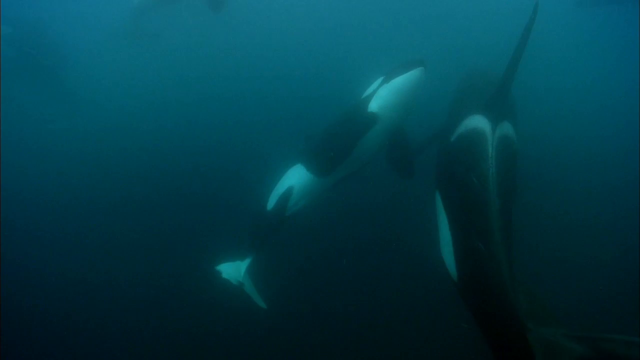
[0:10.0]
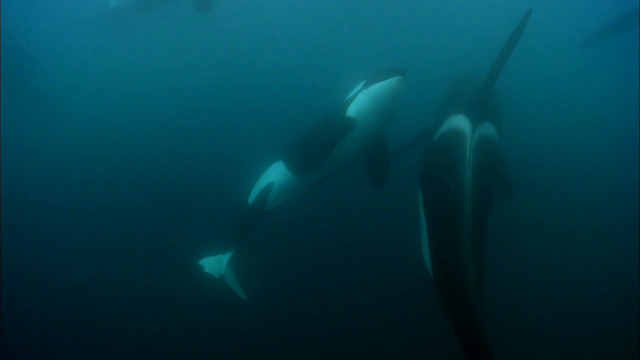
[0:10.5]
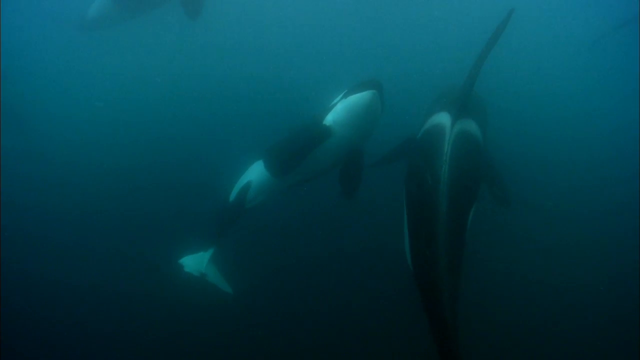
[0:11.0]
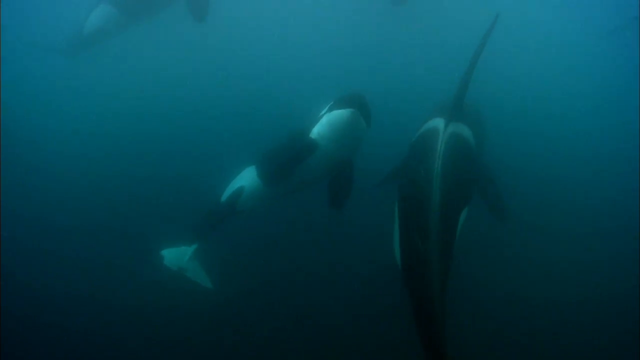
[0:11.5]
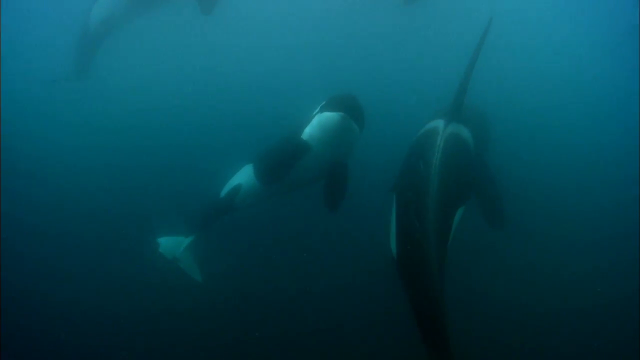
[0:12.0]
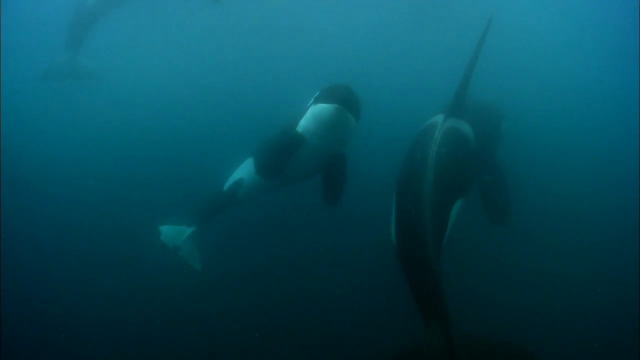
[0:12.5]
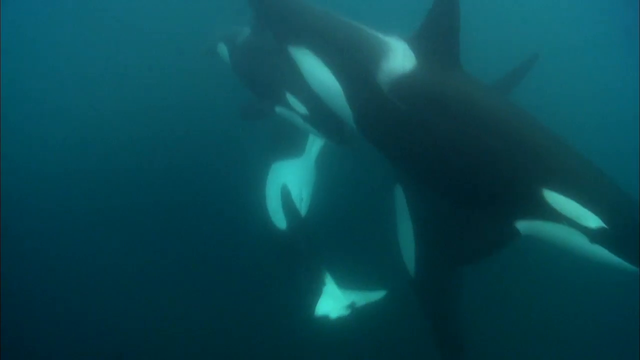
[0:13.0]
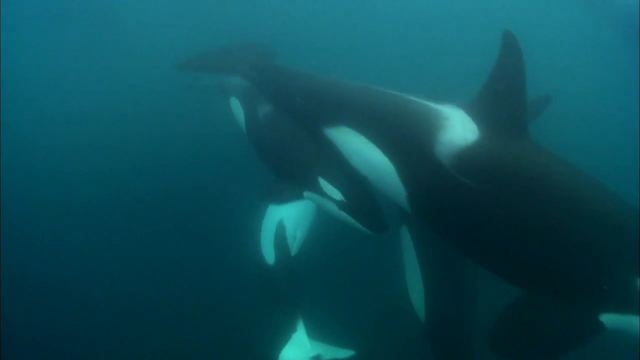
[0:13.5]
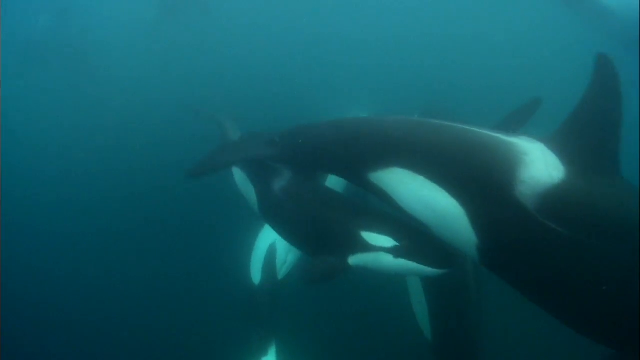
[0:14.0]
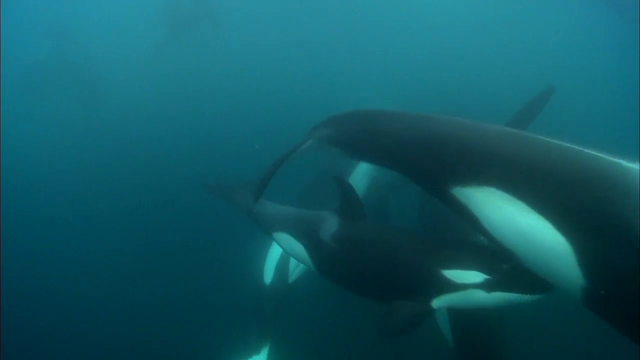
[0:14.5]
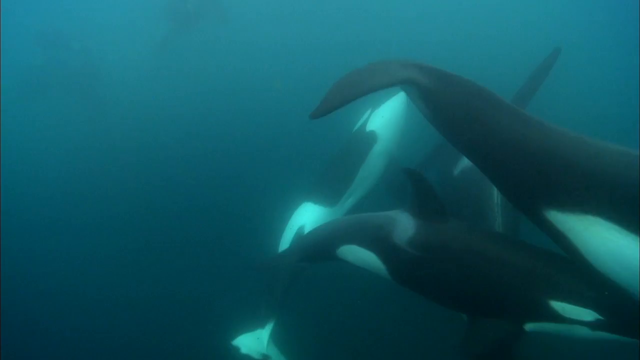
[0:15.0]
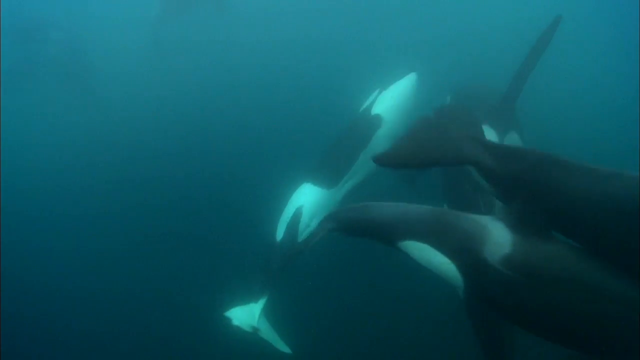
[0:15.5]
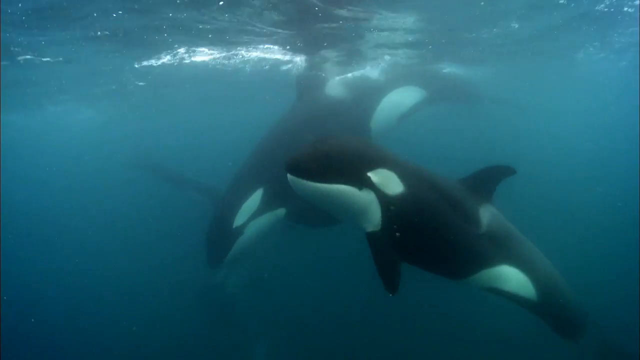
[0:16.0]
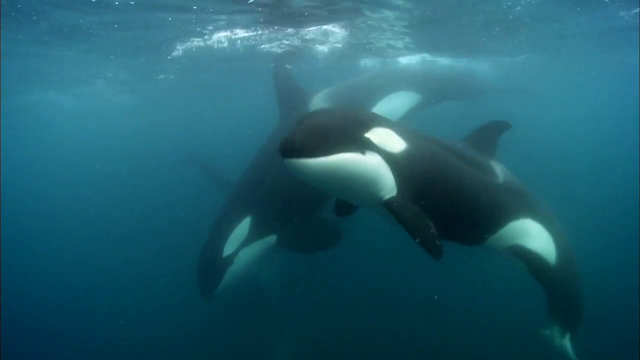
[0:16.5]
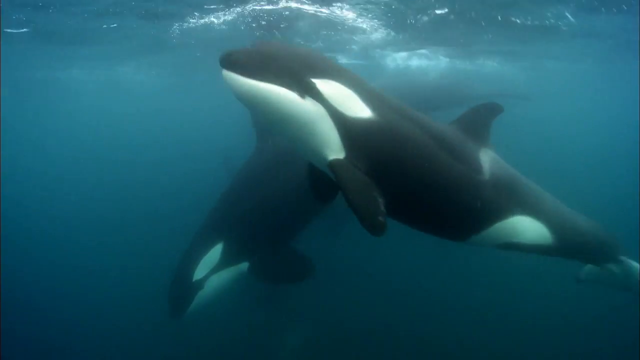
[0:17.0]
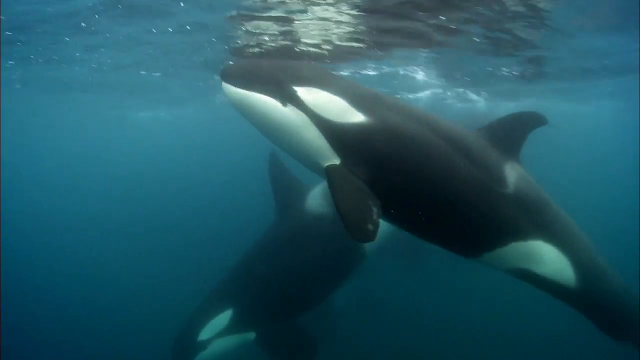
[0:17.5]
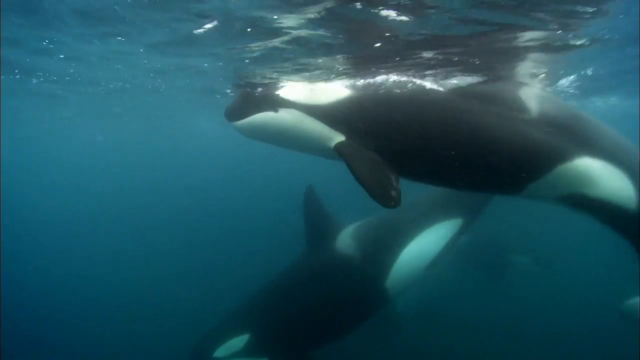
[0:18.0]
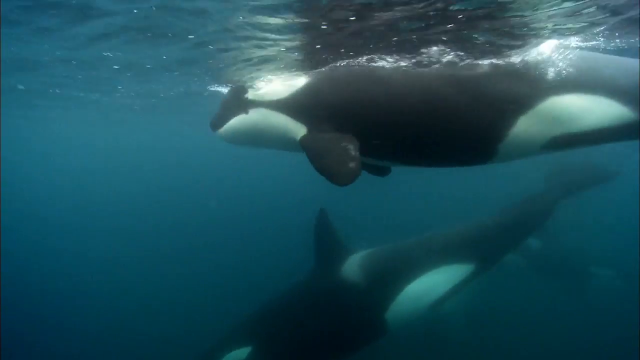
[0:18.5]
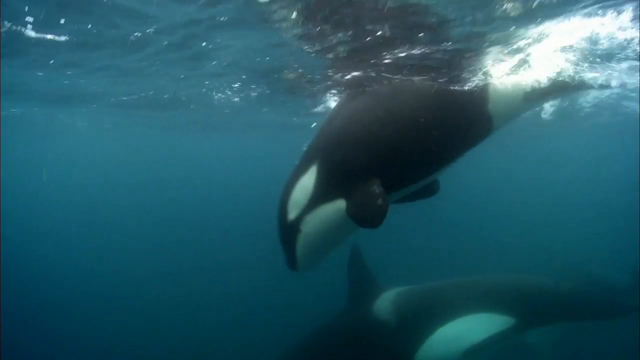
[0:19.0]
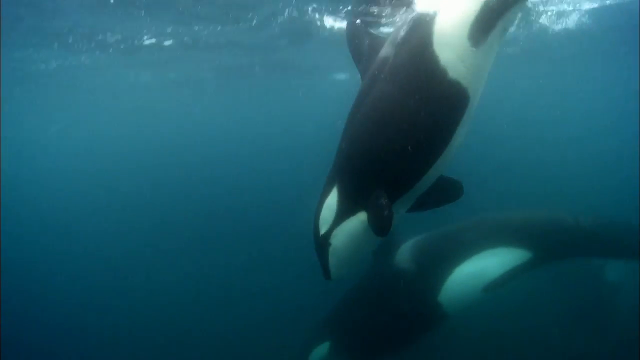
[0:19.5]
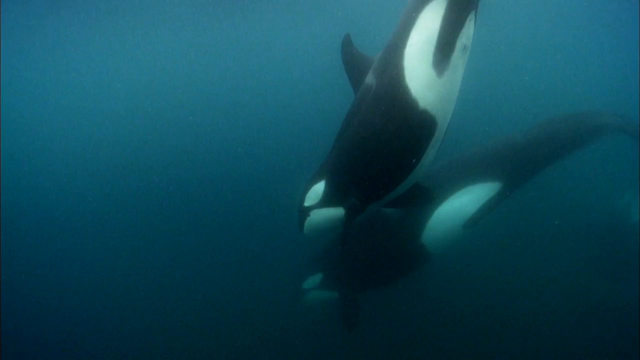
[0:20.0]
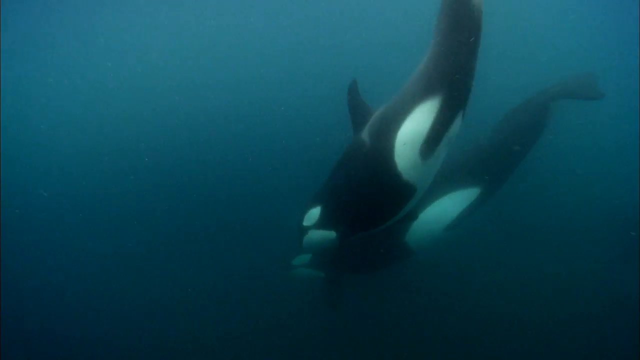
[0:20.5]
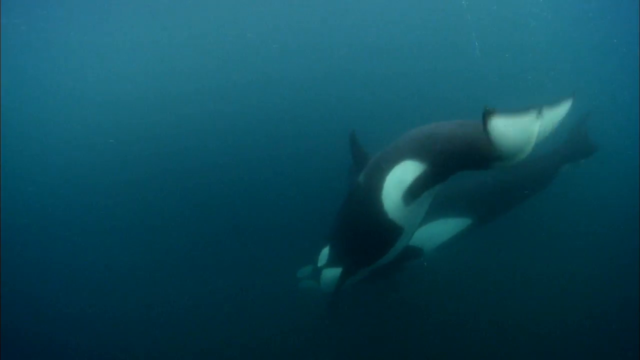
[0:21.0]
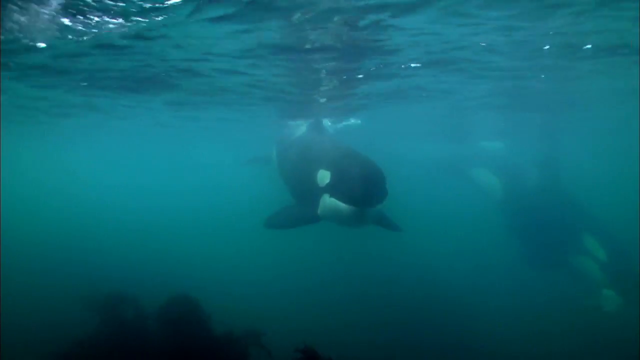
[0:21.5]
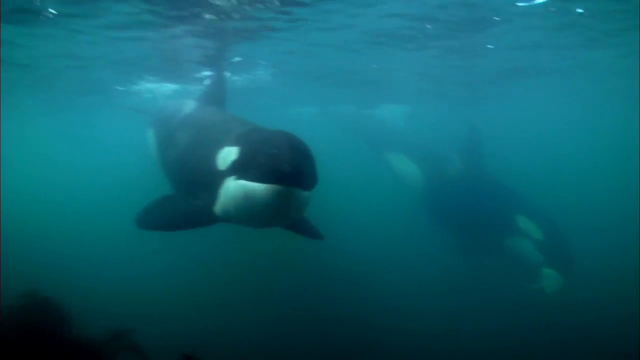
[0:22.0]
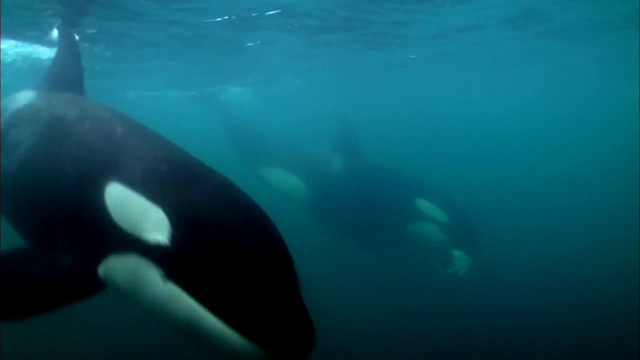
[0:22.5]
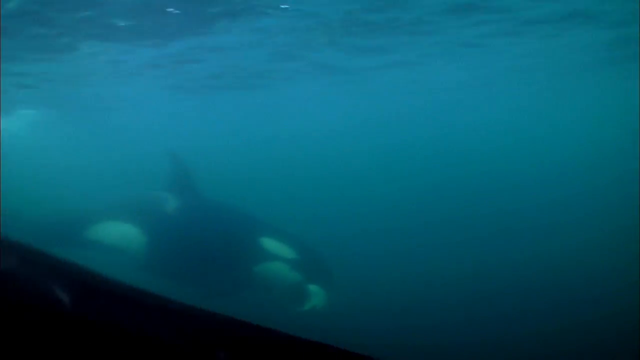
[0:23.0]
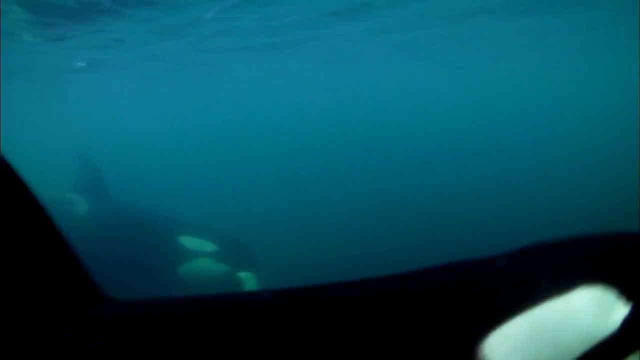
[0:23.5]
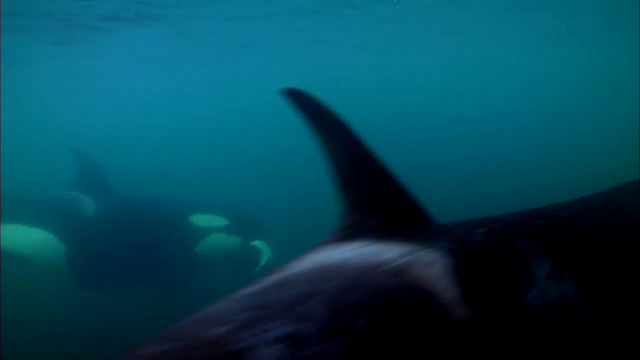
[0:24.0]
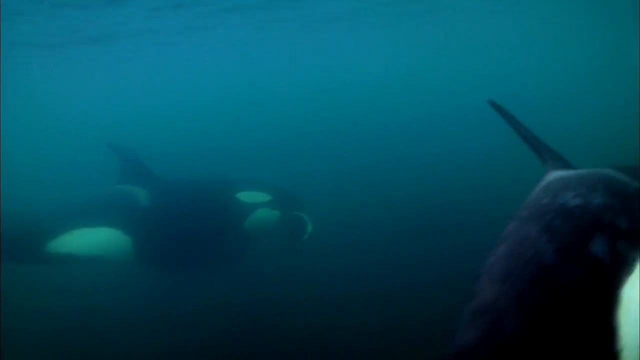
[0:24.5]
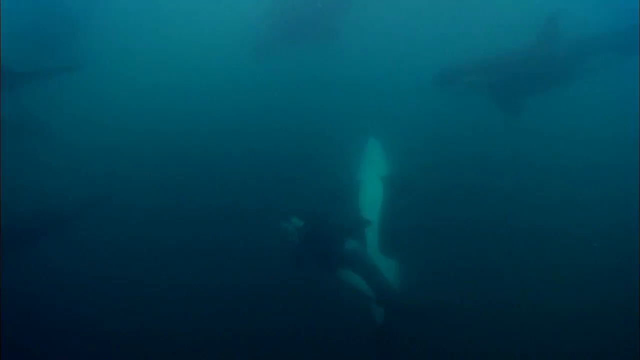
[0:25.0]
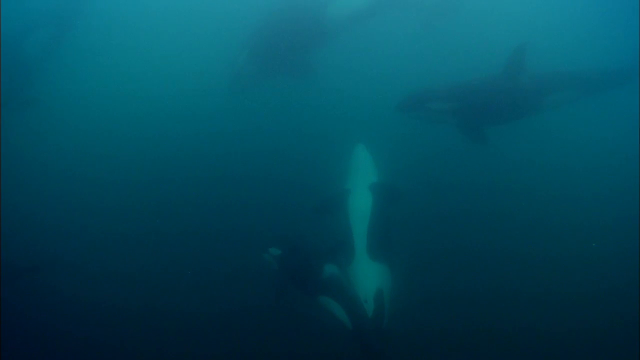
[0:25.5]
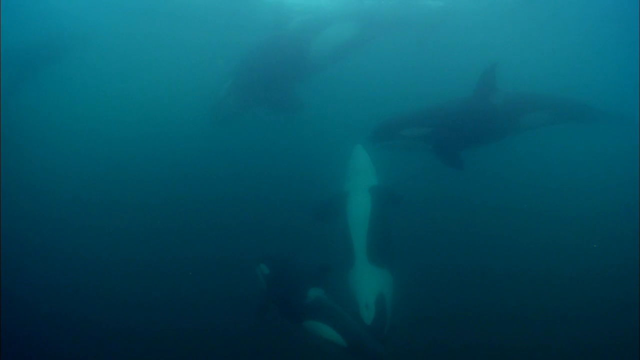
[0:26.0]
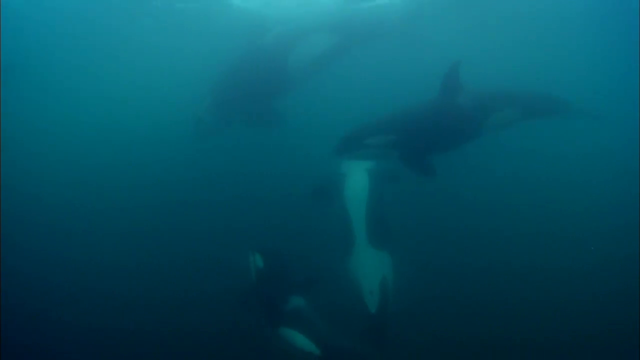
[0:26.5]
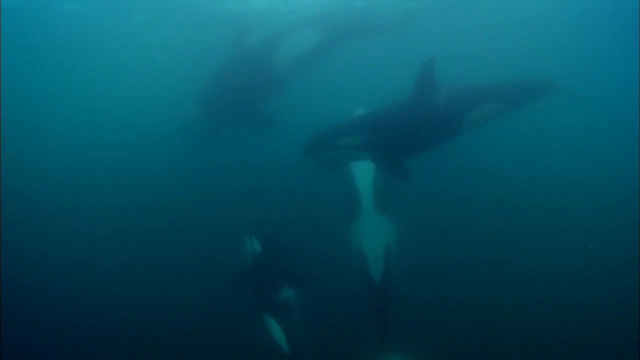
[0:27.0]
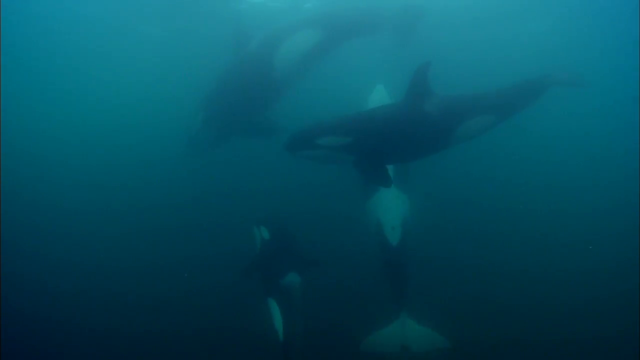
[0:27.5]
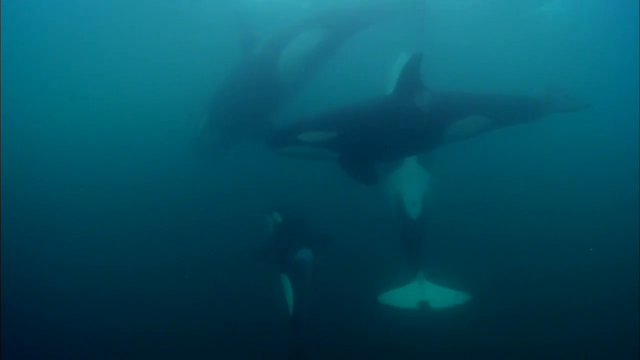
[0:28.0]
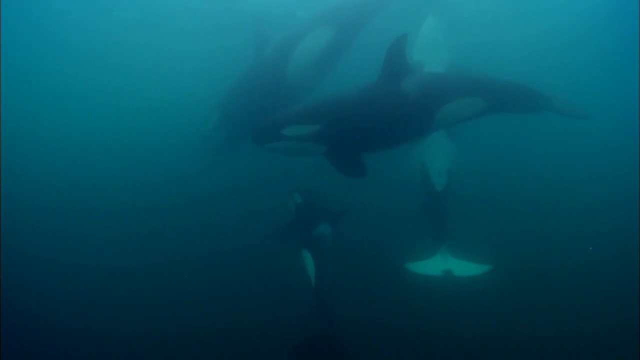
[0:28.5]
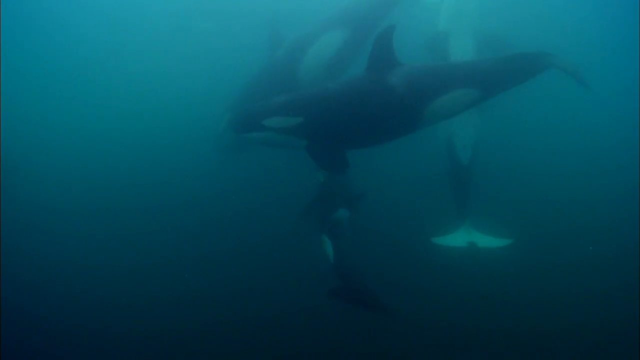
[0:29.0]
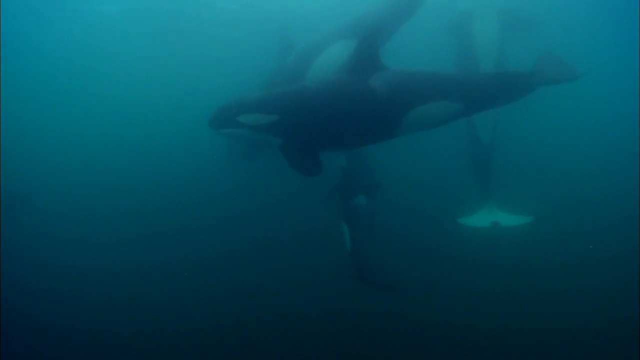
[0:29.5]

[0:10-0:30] Two apparent killer whales swim under the water, though their colours and whites look a little different. They swim around with each other, a mother and a baby, and there seem to be several different families of them. The little baby follows its mother the whole time. The patterns on their backs and the white of their bellies are visible, with intricate designs on all of them. They swim around what is presumably a sanctuary or aquarium-like place, apparently something to do with the recovery of whales.